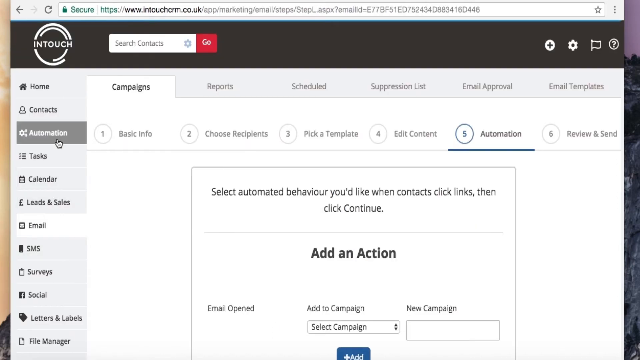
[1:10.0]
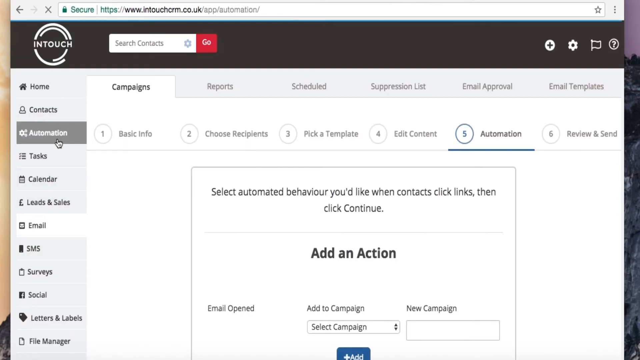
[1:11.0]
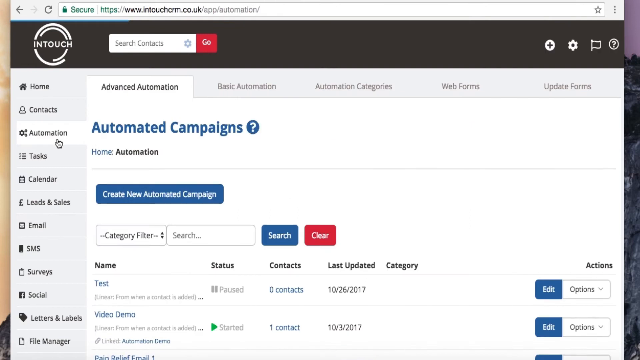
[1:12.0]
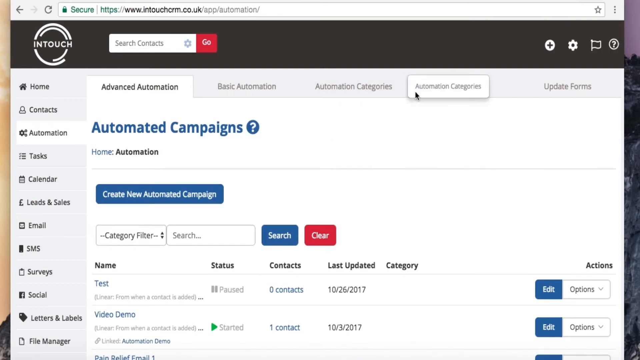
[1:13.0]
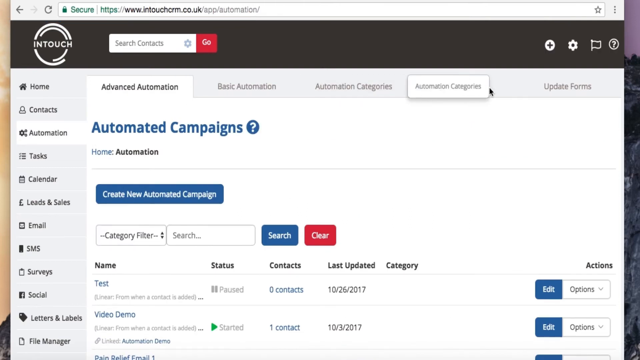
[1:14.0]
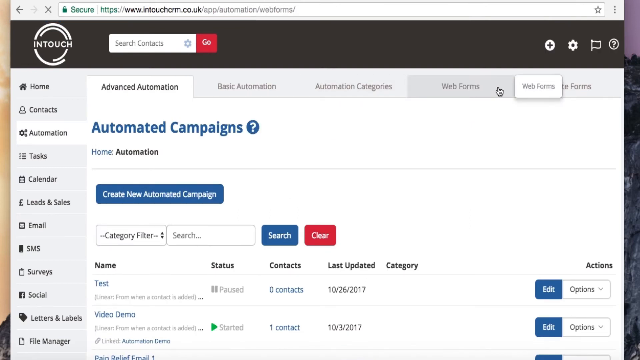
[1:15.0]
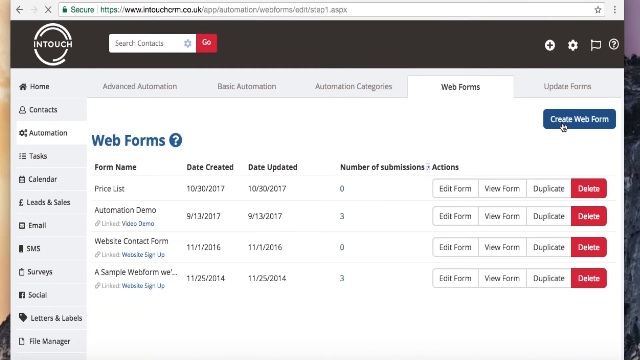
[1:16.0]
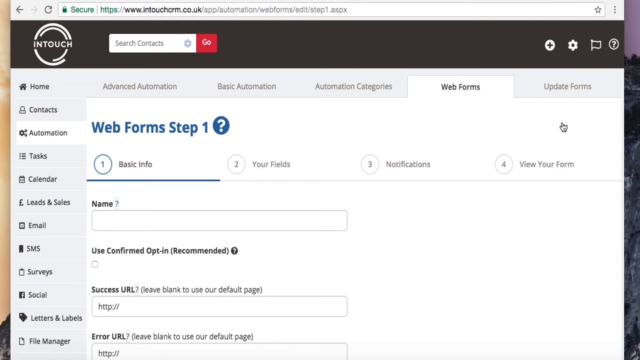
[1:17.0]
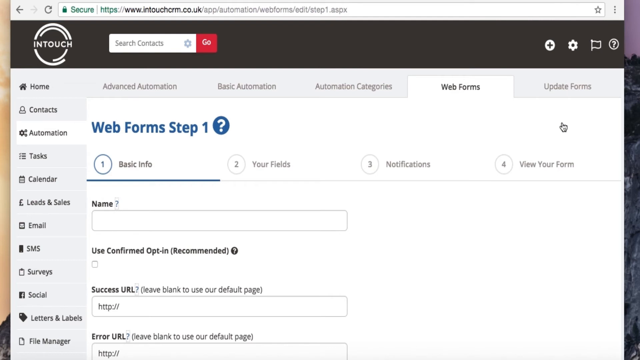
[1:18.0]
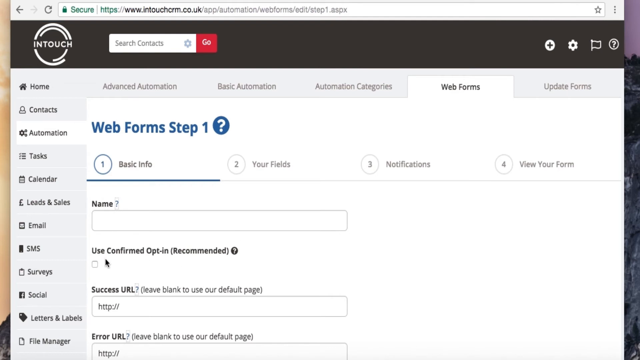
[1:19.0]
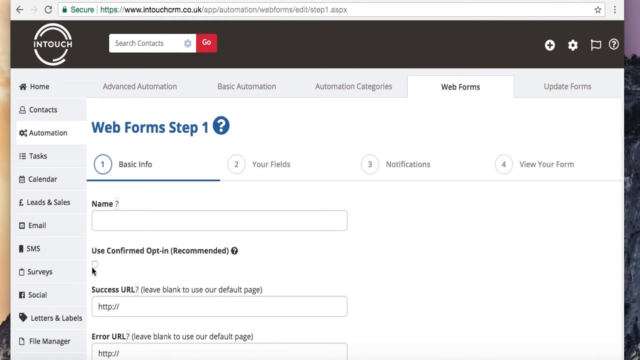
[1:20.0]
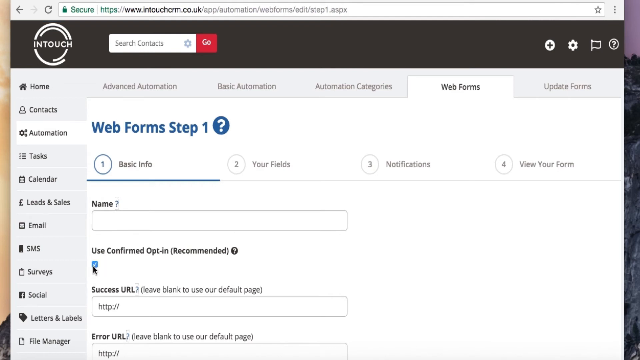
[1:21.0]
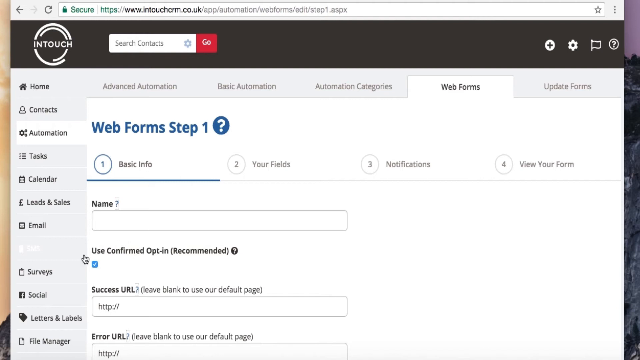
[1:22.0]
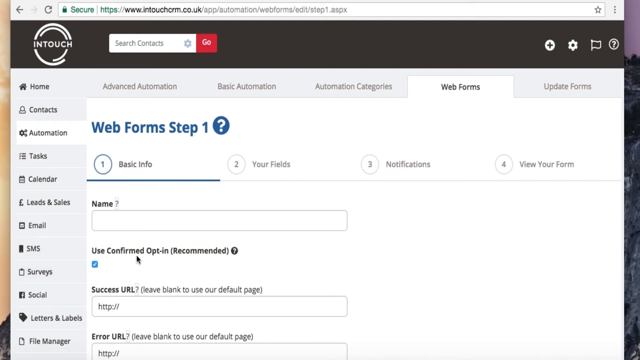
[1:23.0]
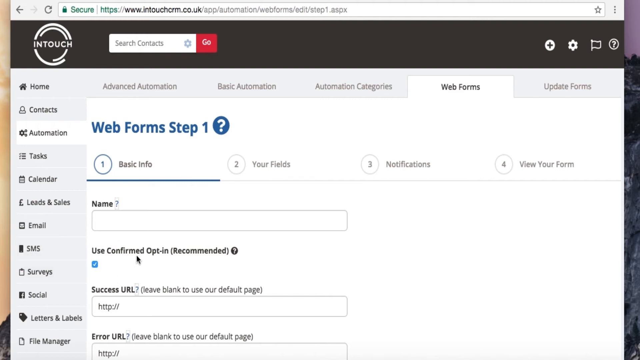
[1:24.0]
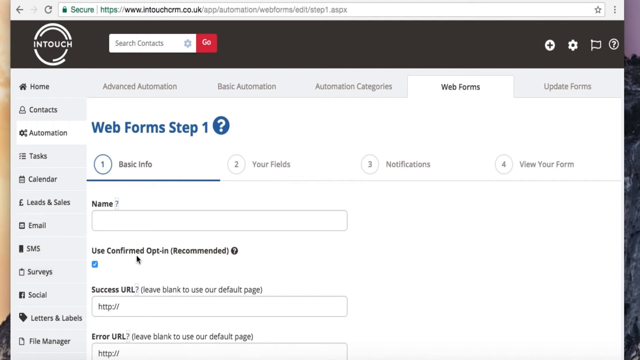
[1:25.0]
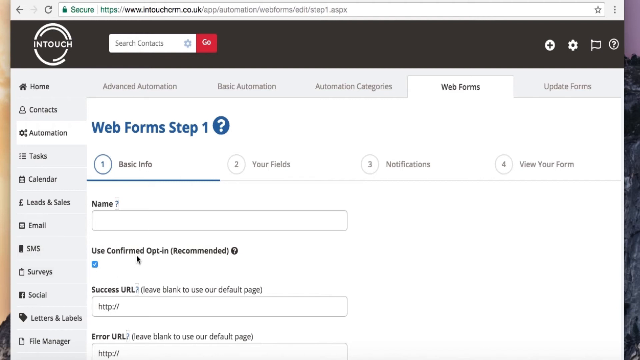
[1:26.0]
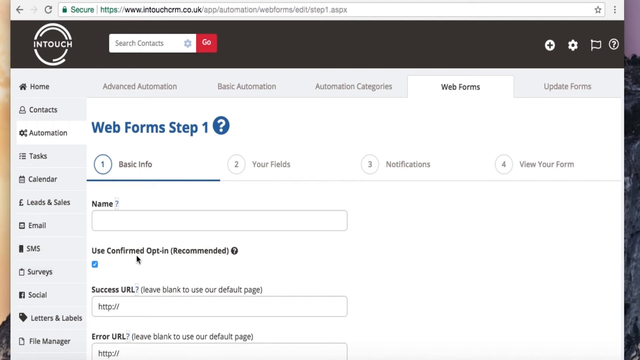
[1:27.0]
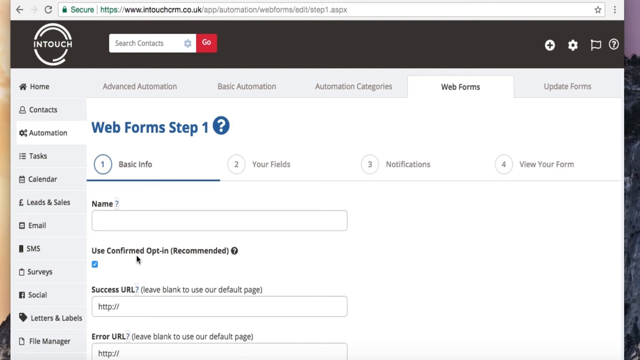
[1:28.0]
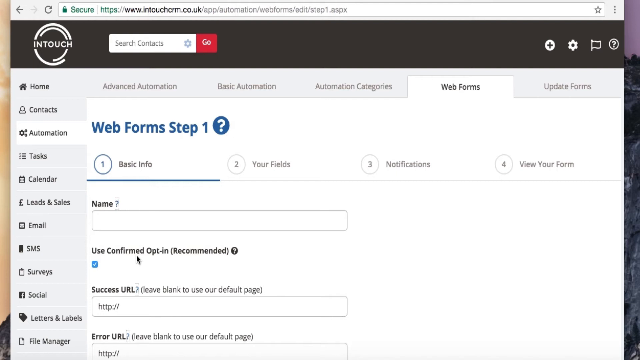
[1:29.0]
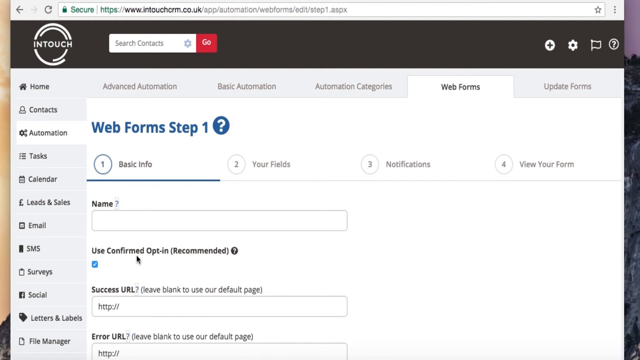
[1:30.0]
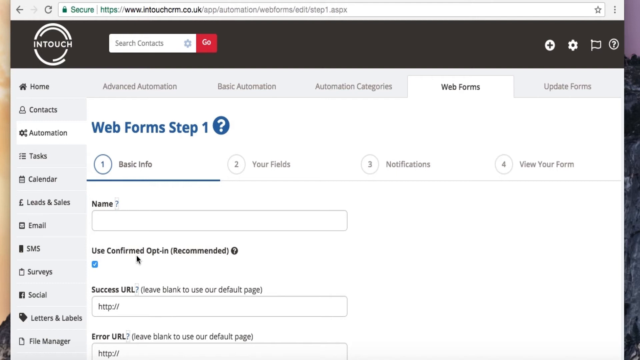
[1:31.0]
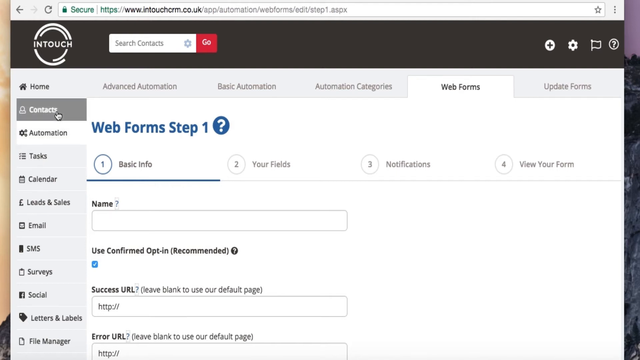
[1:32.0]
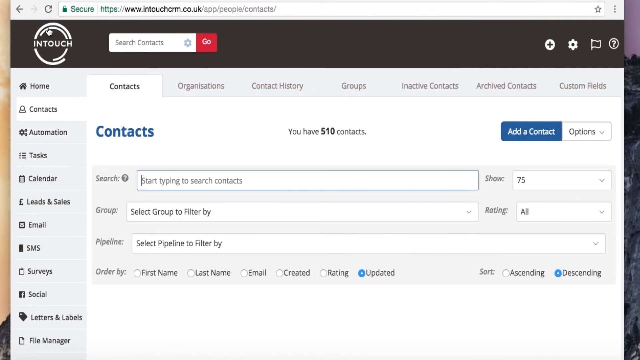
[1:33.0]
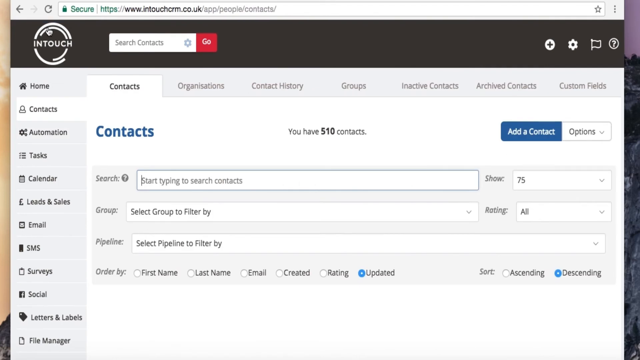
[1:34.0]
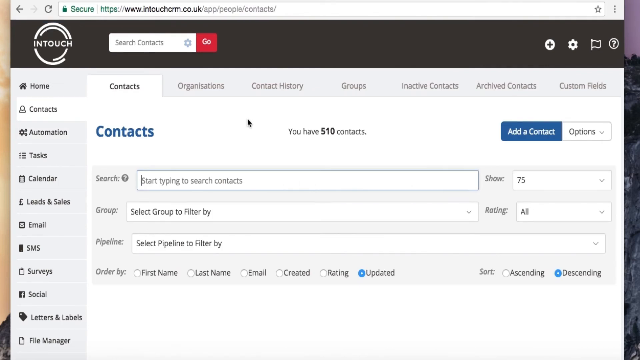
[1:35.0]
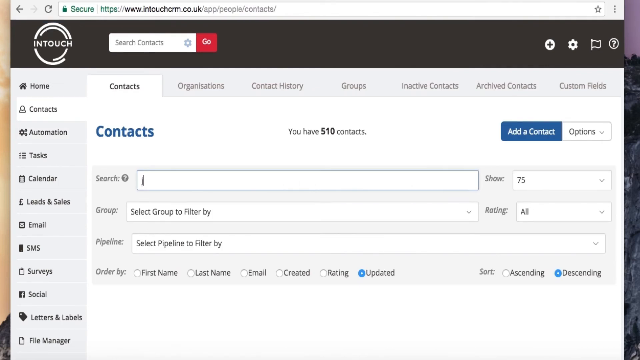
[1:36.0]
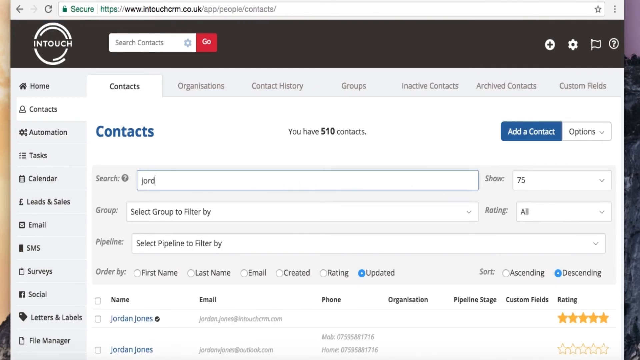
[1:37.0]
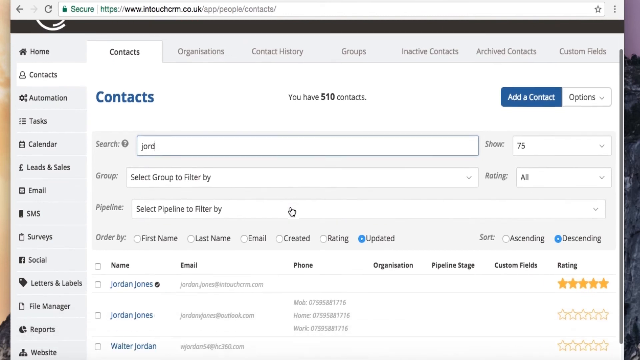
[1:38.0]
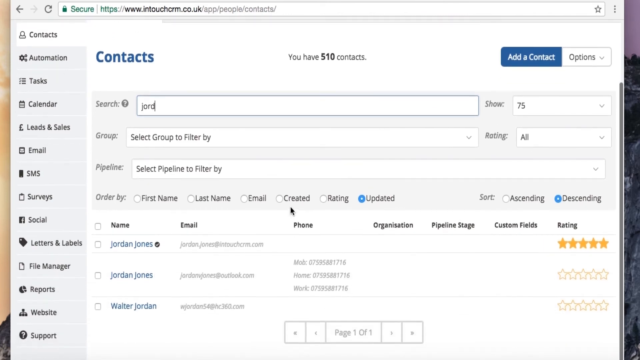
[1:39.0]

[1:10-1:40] Under the word campaigns is a numbered sequence: 1 basic info, 2 choose recipients, 3 pick a template, 4 edit content, 5 automation, which is the one selected, and 6 review and send. Below that a little square says "select automated behavior you'd like when contact click links, then click continue," and below that it says "add an action." Automation on the left side is clicked, and across the top now are advanced automation and four more clickable items to its right, with "add automations" in blue below. There is a blue button reading "create new automated campaign" and a search bar. Create web form is clicked, which opens a web form page with information under it. The checkbox under "use confirmed opt-in" is clicked; above it is the name field and below it the success URL, and the cursor is circled around it somewhat. Contacts at the top is then clicked, bringing up the Contacts page, which says "you have 510 contacts" in the center. "Jordan" is typed in, the page is scrolled down, and the second link, "Jordan Jones," is clicked.